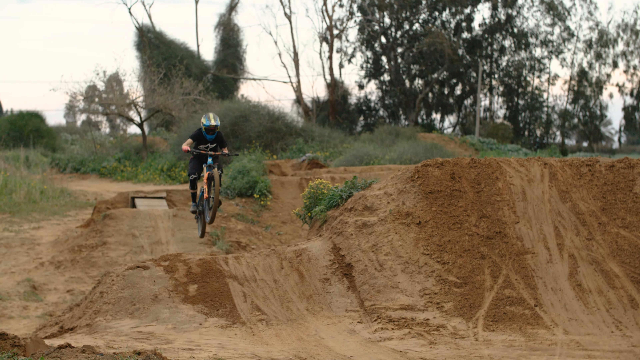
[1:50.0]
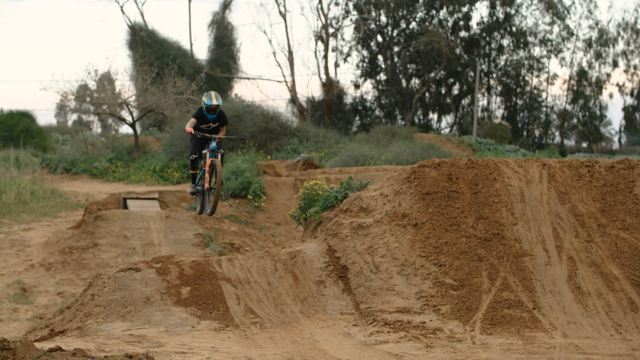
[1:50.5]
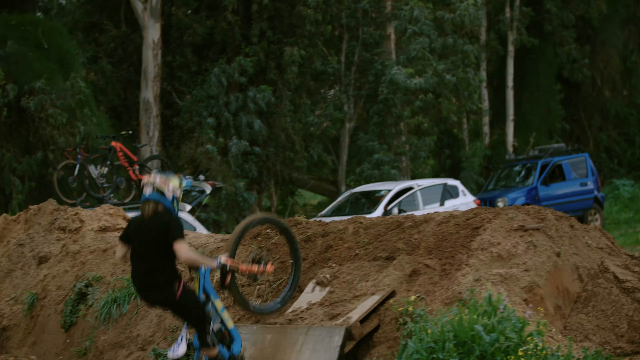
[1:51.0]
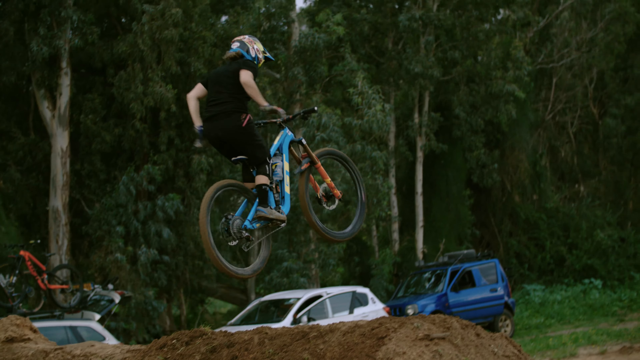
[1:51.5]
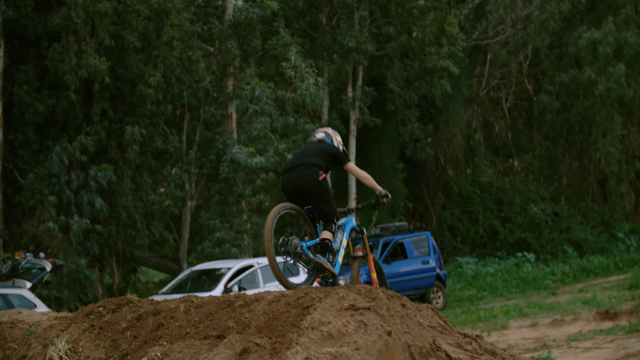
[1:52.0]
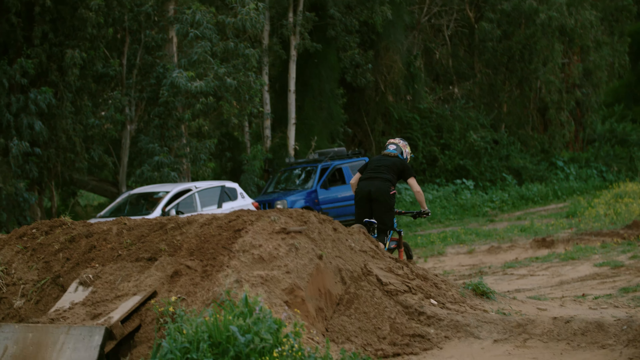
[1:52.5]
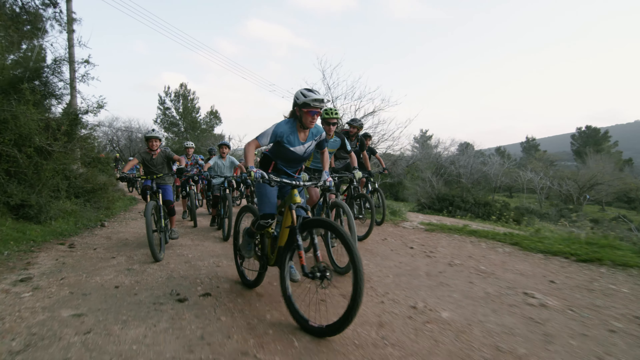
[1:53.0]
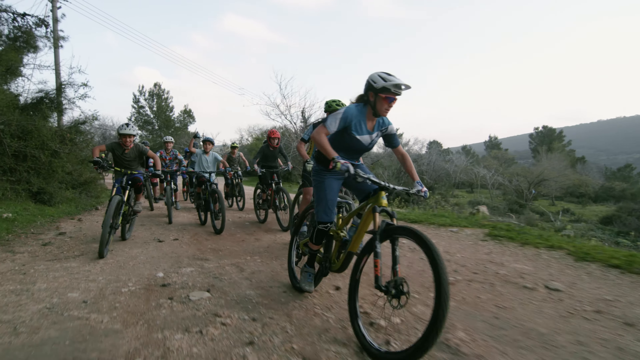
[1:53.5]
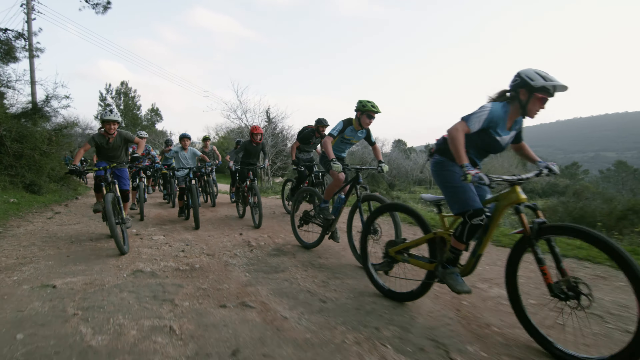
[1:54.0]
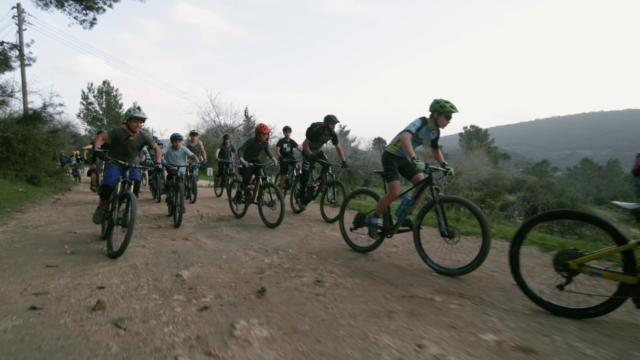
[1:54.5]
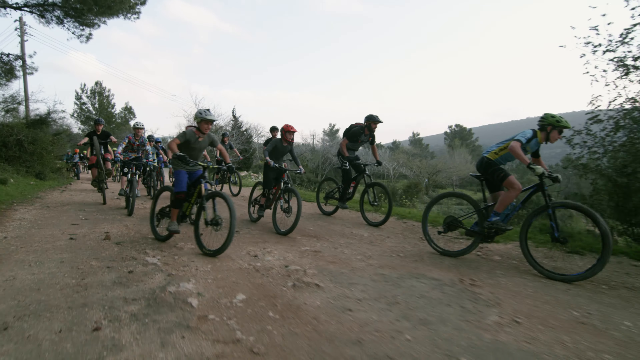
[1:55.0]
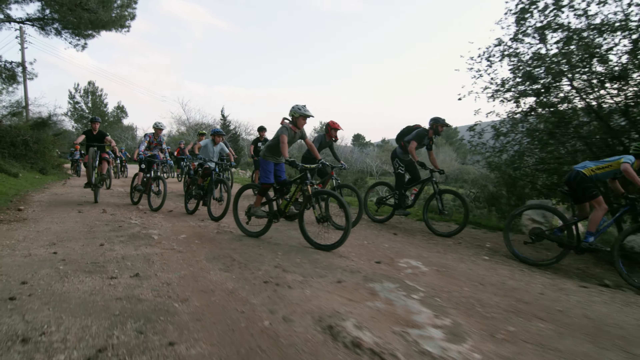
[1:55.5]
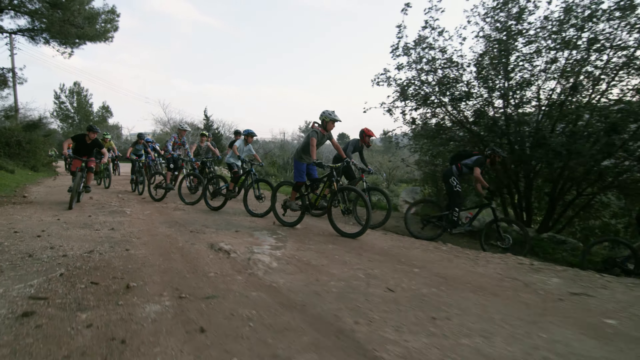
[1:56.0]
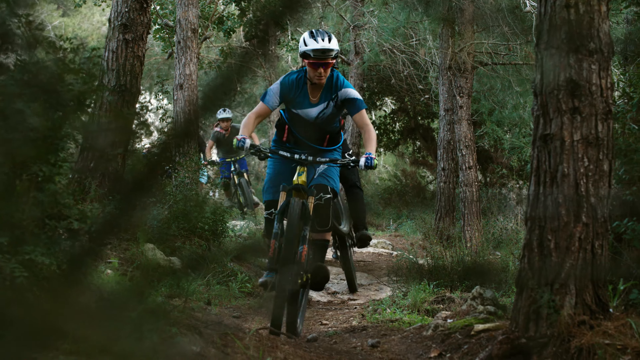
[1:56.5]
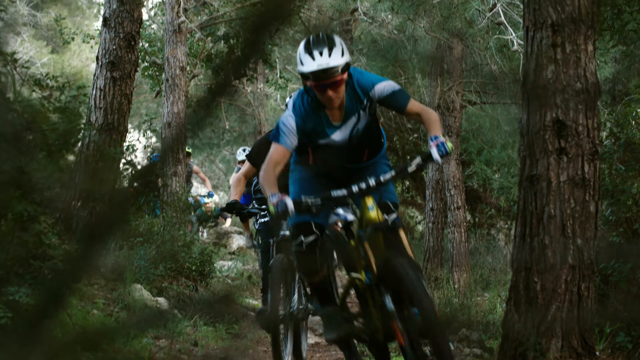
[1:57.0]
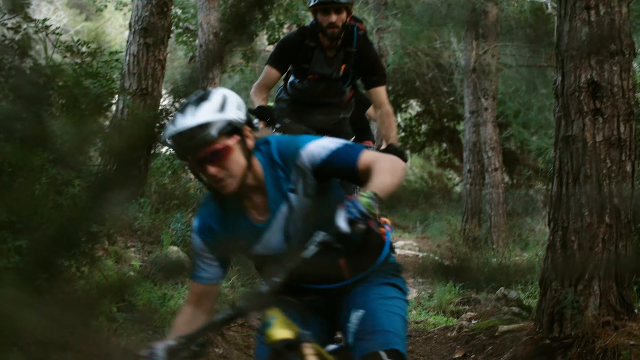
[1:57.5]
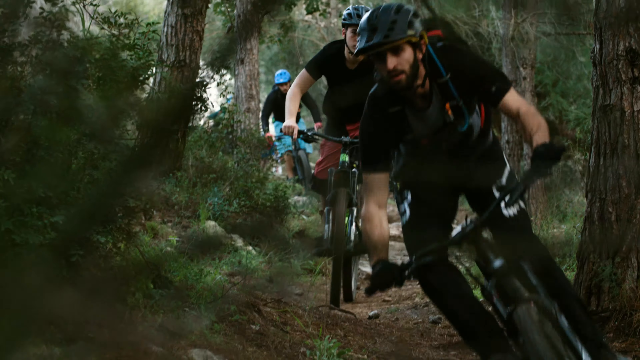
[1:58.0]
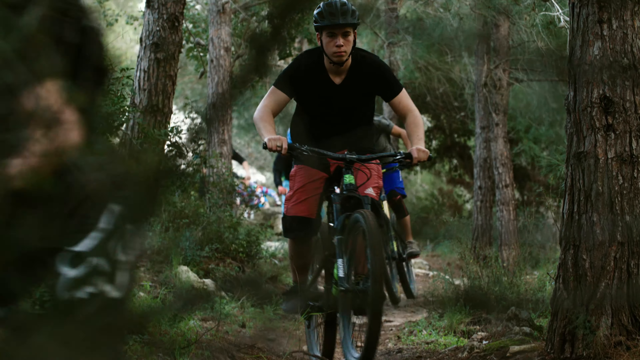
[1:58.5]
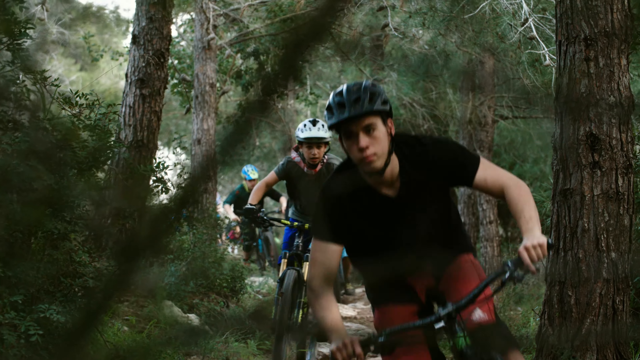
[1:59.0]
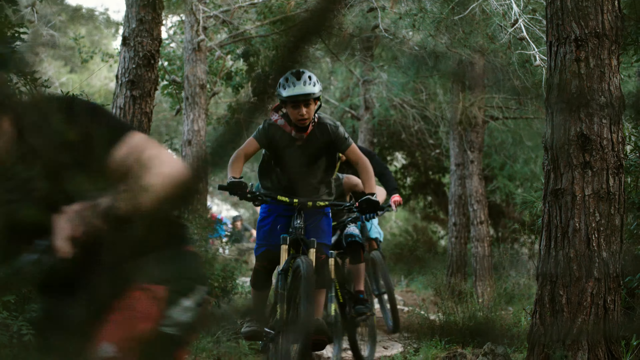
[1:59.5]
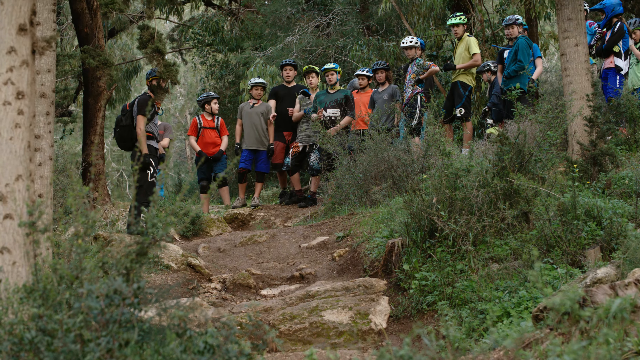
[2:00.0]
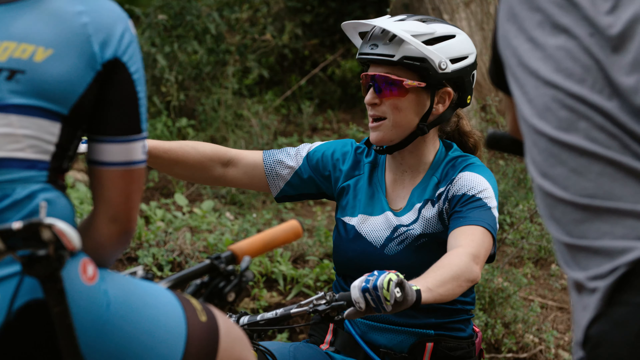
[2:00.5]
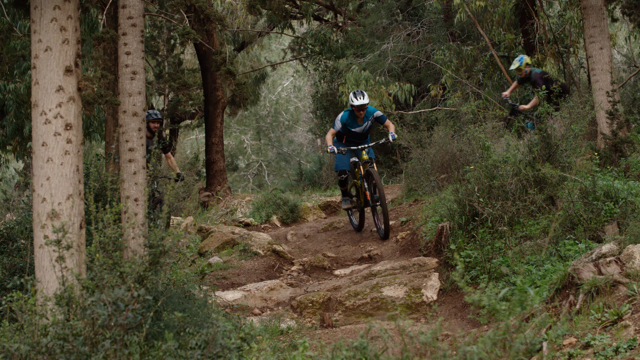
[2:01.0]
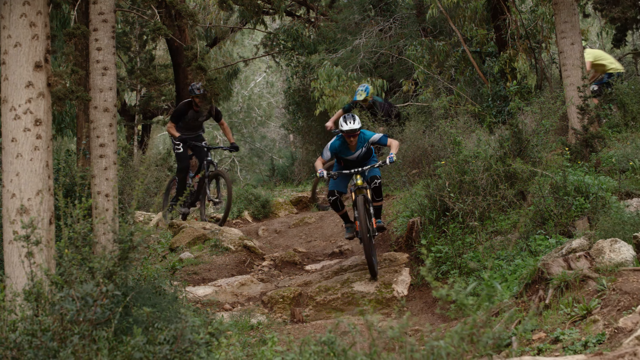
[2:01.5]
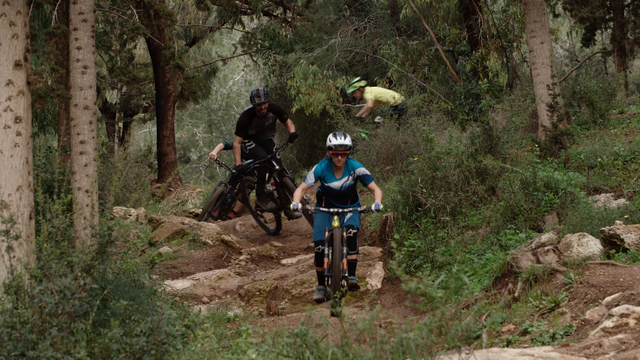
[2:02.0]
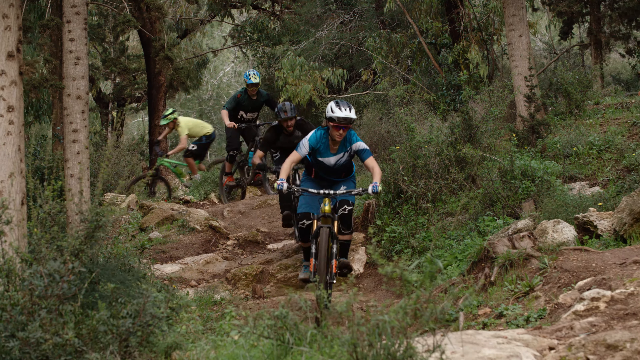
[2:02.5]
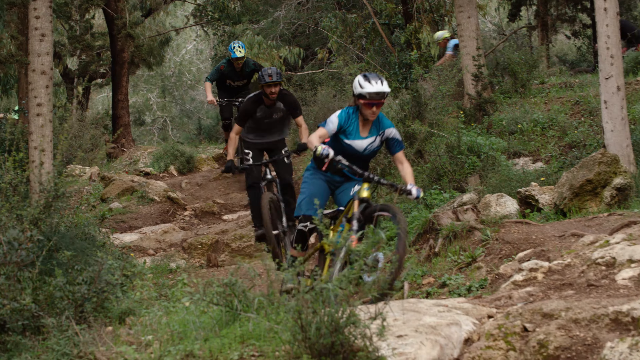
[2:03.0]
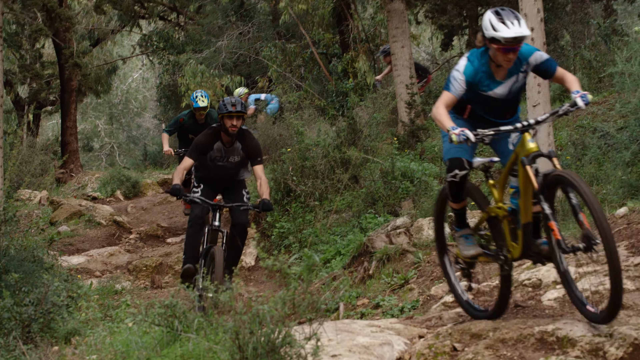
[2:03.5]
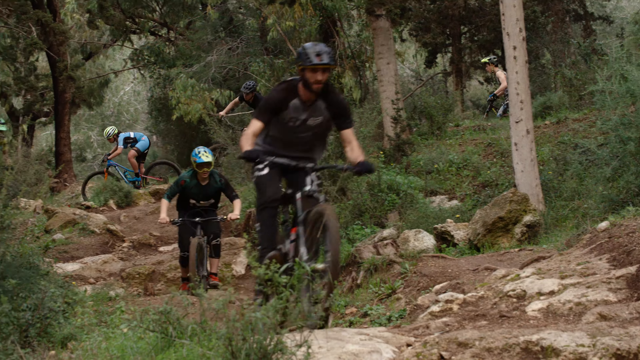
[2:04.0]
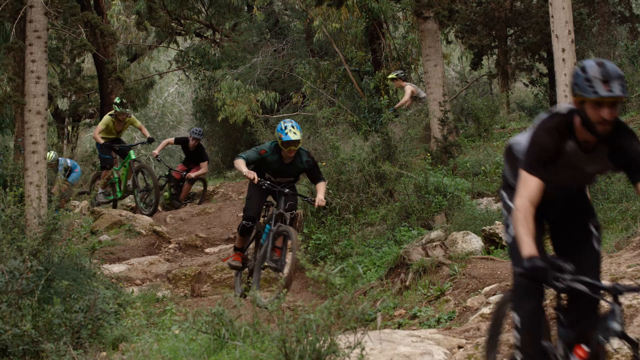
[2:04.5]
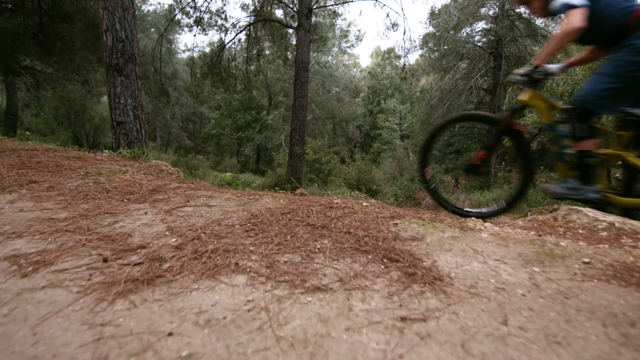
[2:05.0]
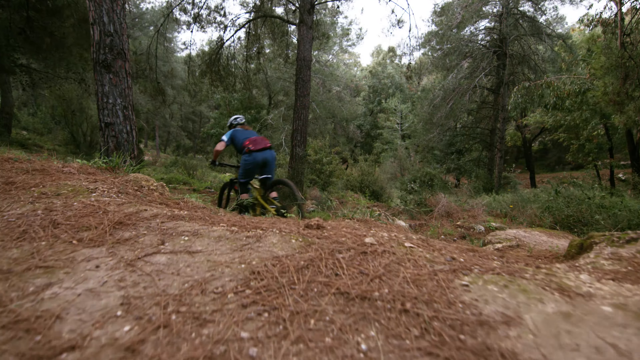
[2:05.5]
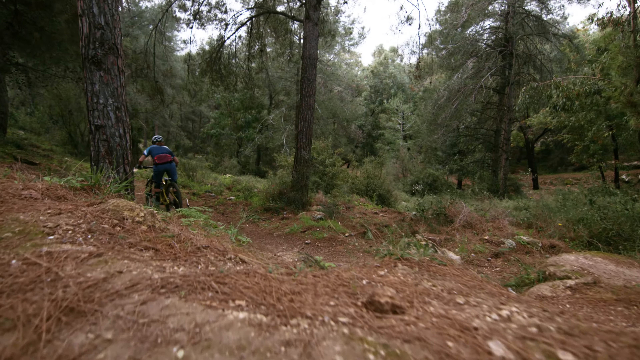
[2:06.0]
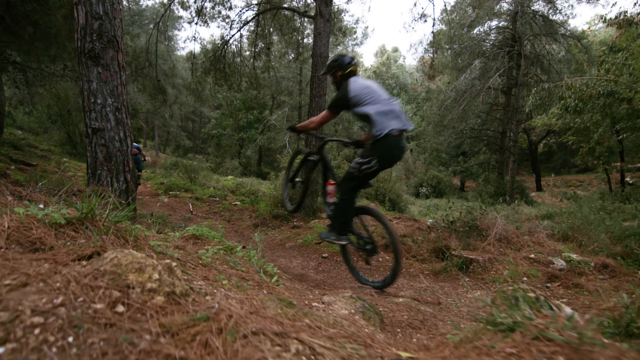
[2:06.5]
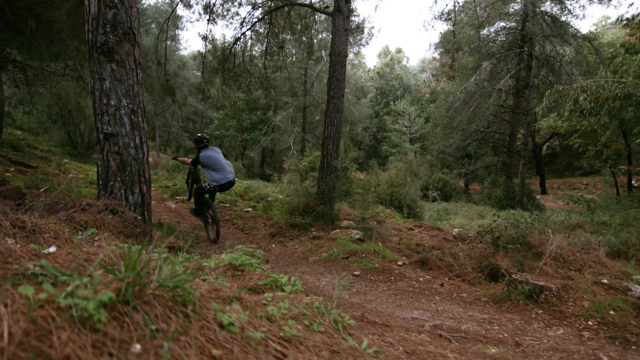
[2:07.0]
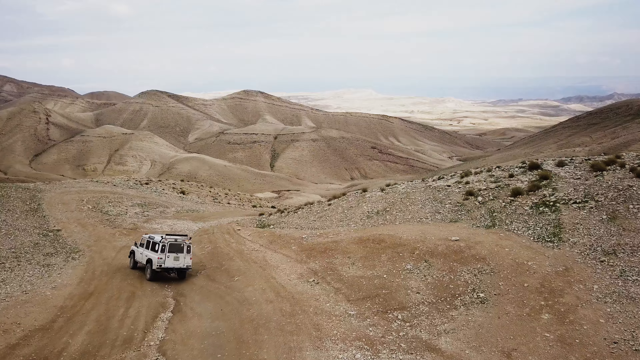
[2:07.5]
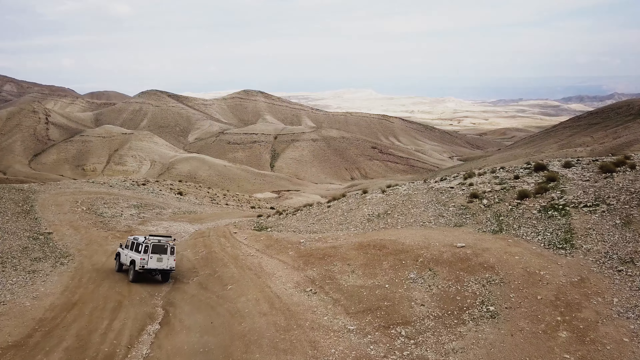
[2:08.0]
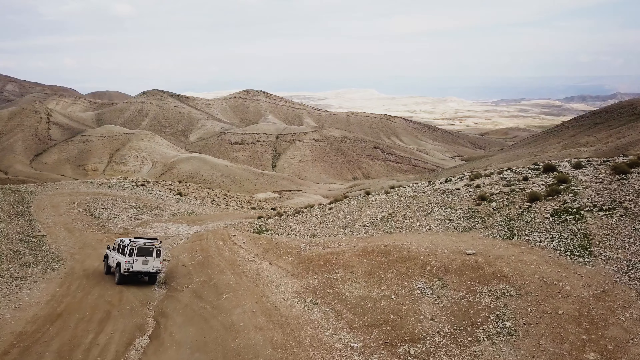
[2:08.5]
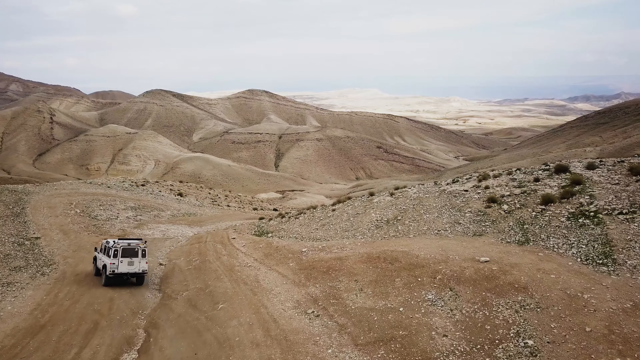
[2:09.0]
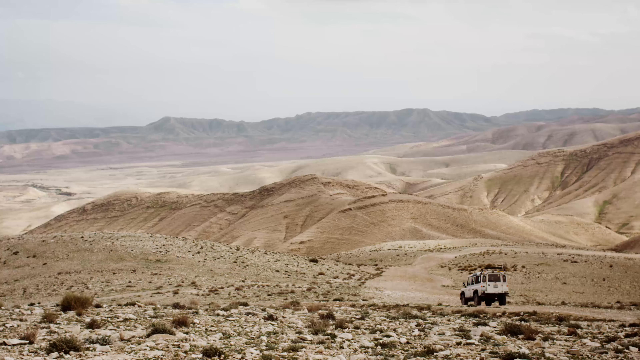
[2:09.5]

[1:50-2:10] She makes a slow-motion jump over one of the ramps, followed by a real-time jump over one. A group of bicyclists rides on what looks like a two-lane dirt road in the country, with many trees along the sides. She might be the one in front; it is unclear whether they are racing or riding together. All are on off-road dirt bikes and wearing helmets. They then come toward the camera one at a time down a narrower path through the woods. At one point they are stopped, and she sits on her bike talking to the others, possibly instructing them and pointing around. Many of the tracks are bumpy and hilly rather than smooth. Someone does a wheelie, and in one section a rider lifts the front wheel off the ground for a fraction of a second. A distant view returns to the treeless dirt hills, where a white SUV drives slowly across the lower left of the image. Another shot of a similar landscape shows the white SUV coming in from the lower left, driving slowly down a dirt road toward the center of the screen.